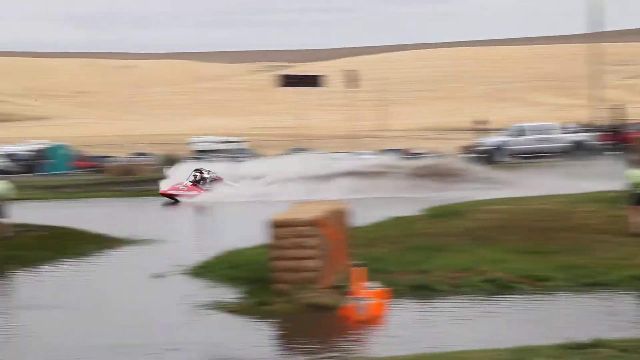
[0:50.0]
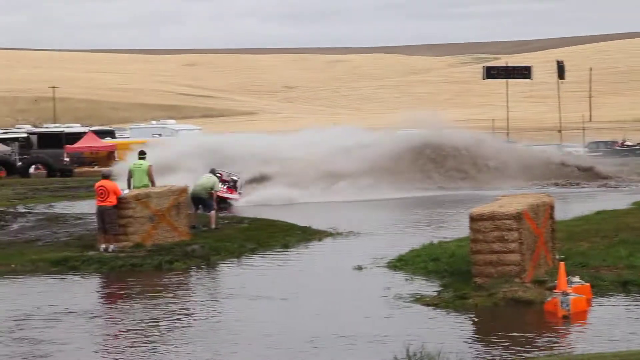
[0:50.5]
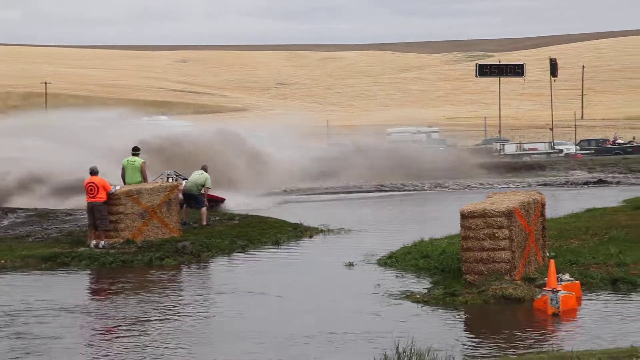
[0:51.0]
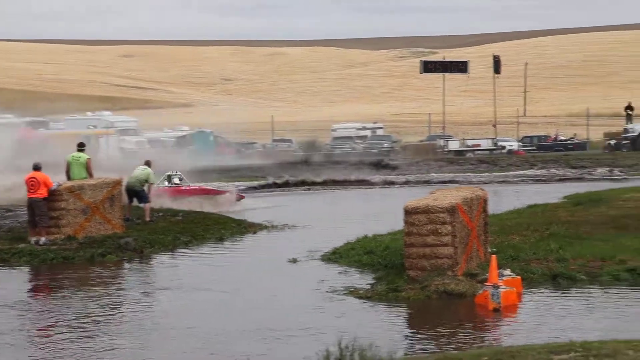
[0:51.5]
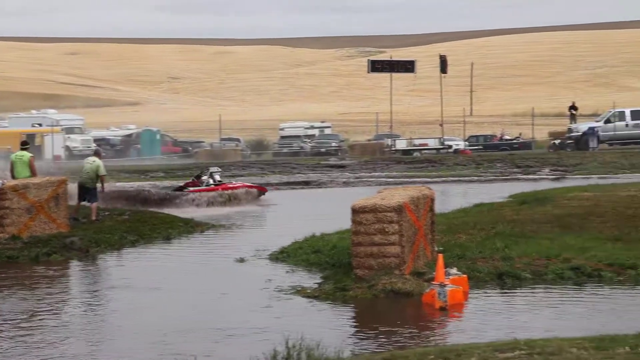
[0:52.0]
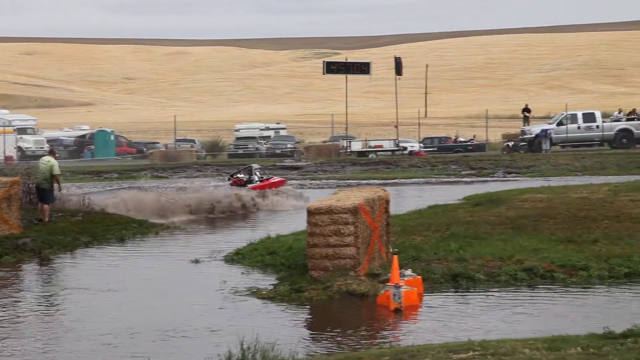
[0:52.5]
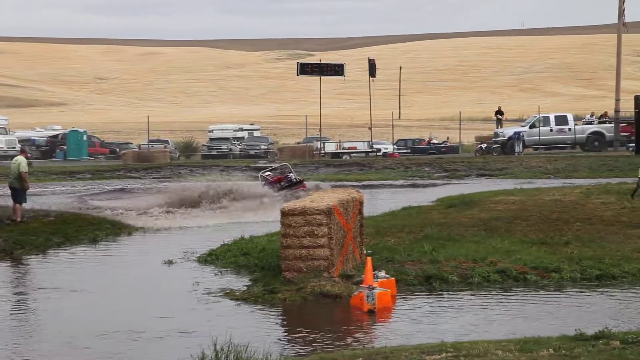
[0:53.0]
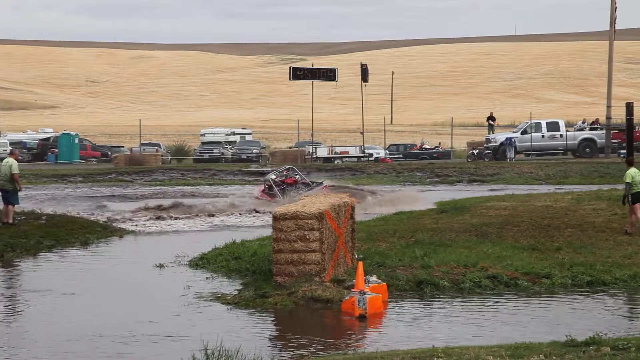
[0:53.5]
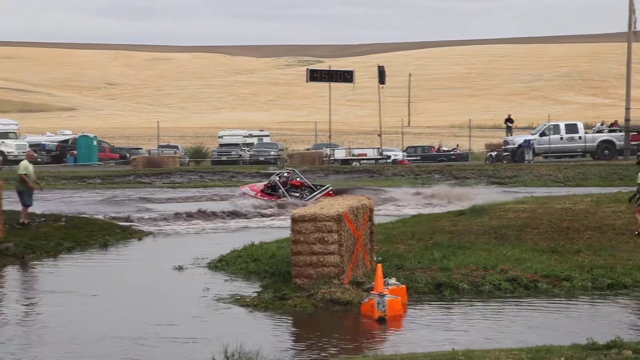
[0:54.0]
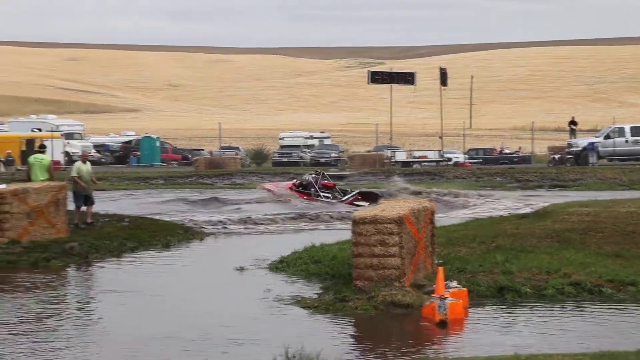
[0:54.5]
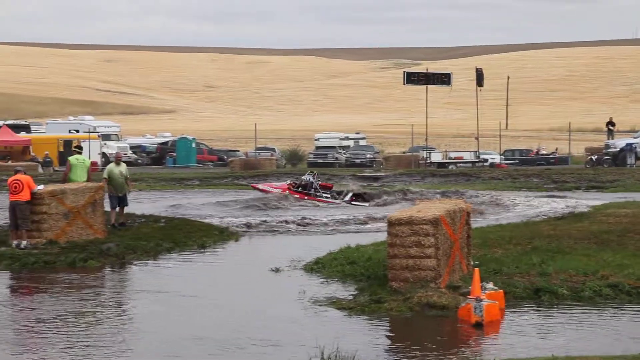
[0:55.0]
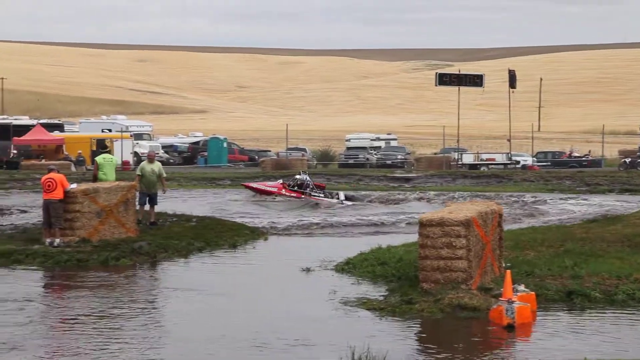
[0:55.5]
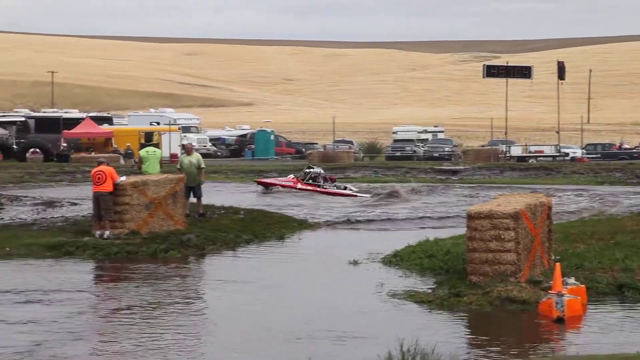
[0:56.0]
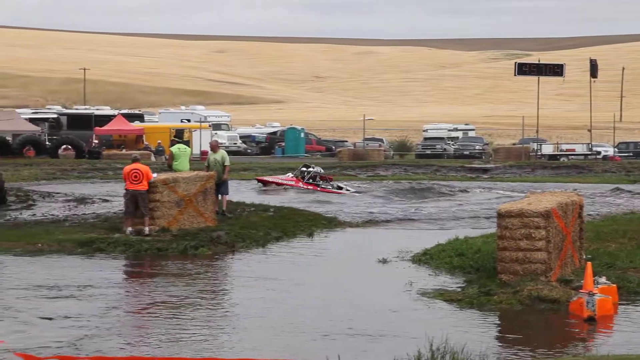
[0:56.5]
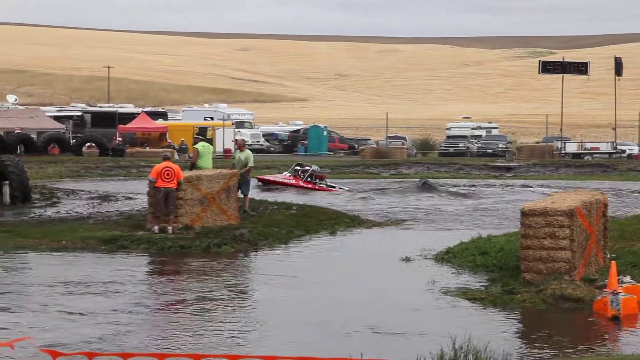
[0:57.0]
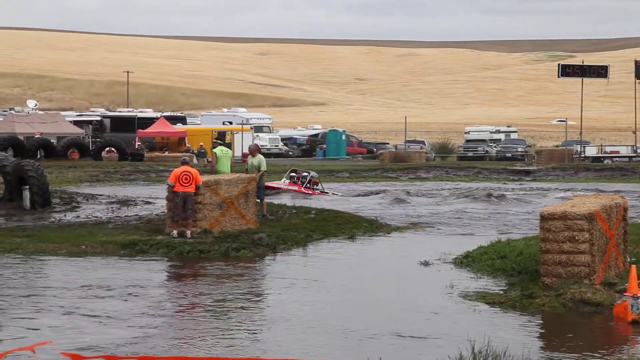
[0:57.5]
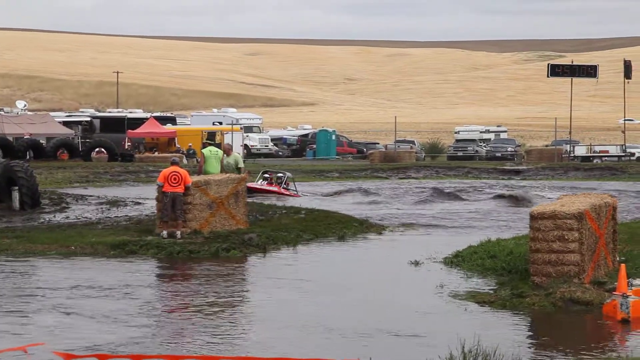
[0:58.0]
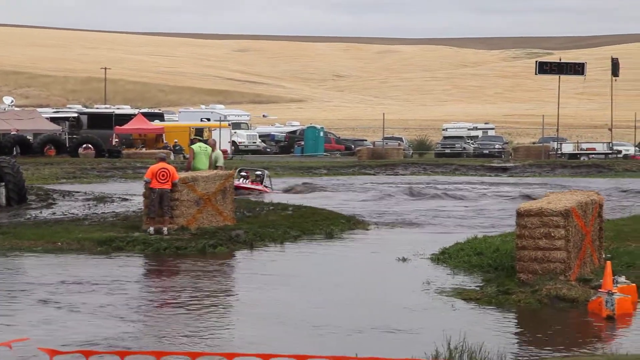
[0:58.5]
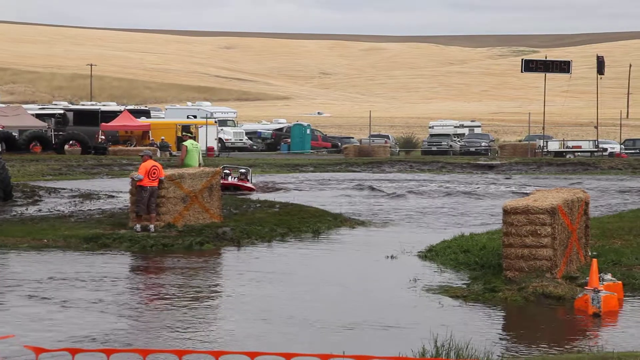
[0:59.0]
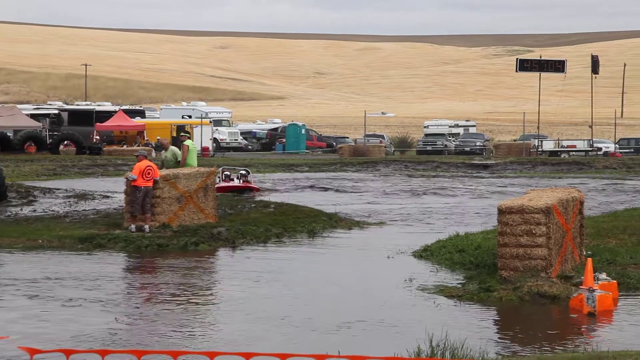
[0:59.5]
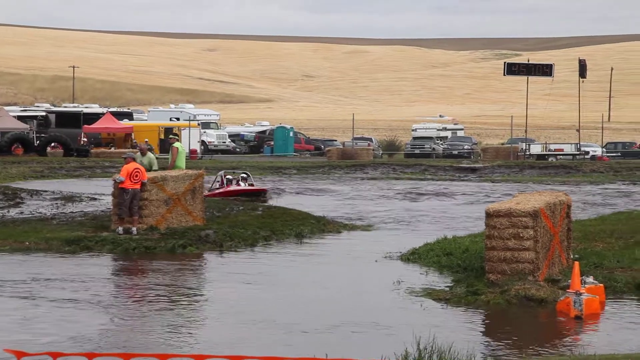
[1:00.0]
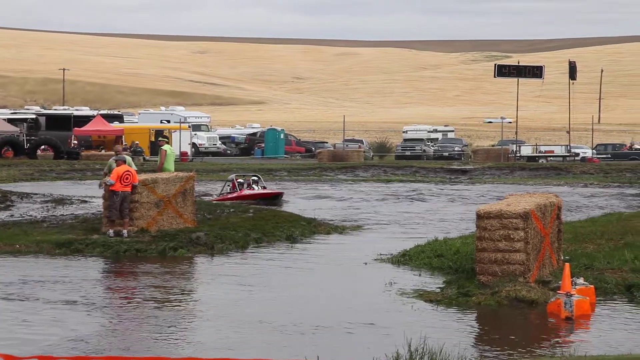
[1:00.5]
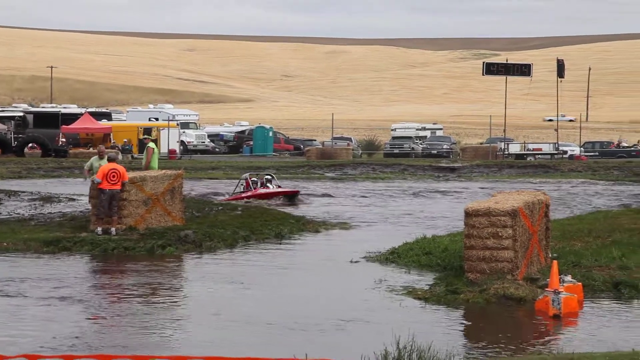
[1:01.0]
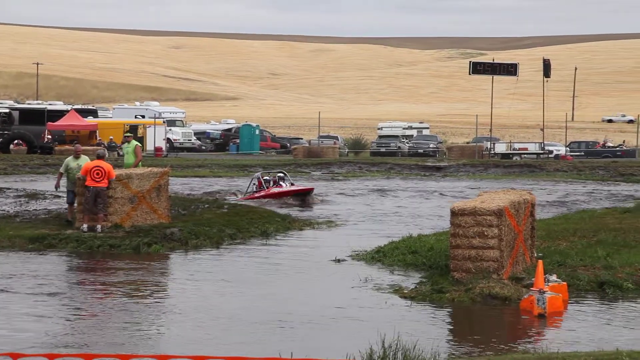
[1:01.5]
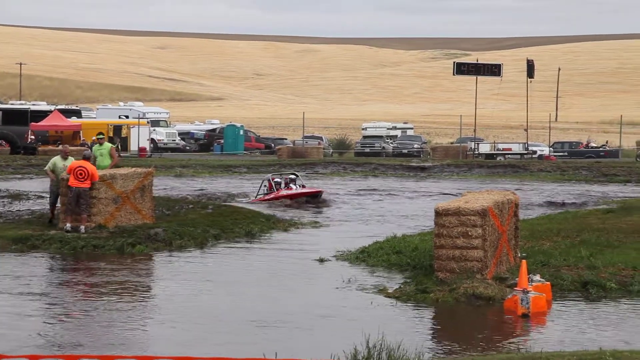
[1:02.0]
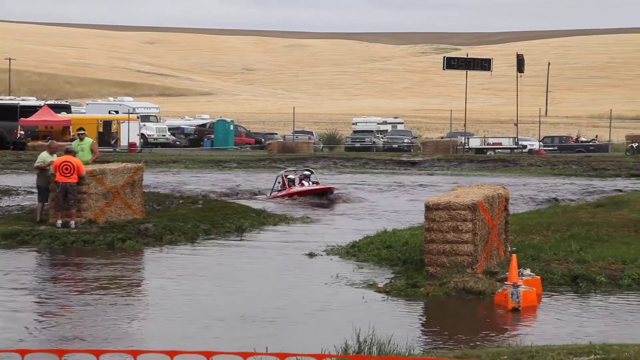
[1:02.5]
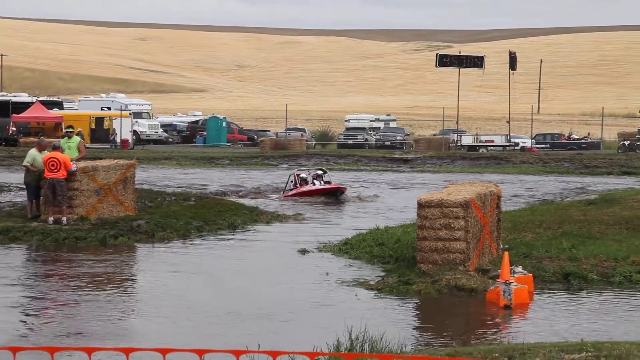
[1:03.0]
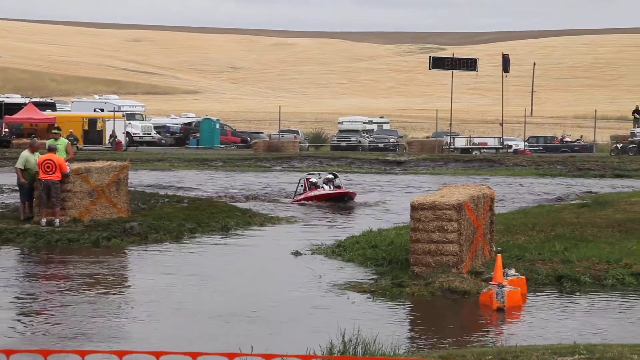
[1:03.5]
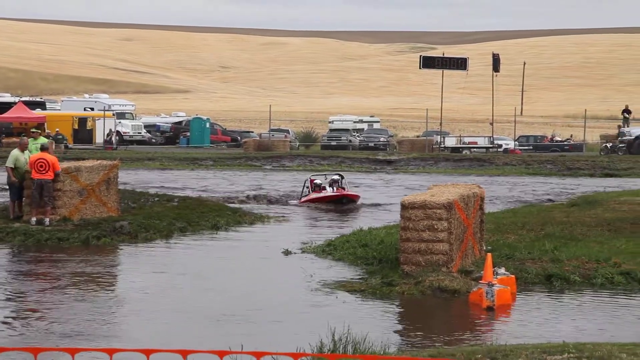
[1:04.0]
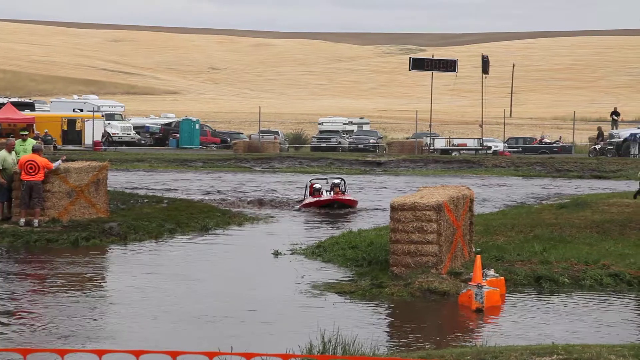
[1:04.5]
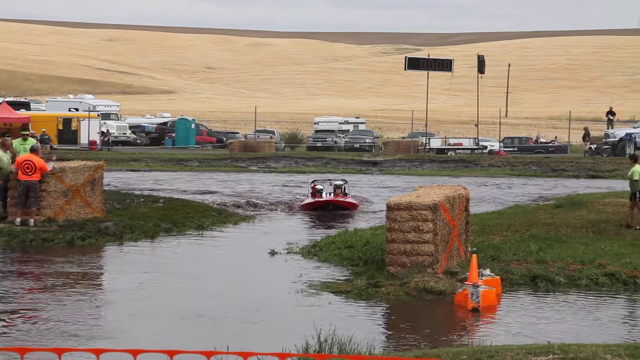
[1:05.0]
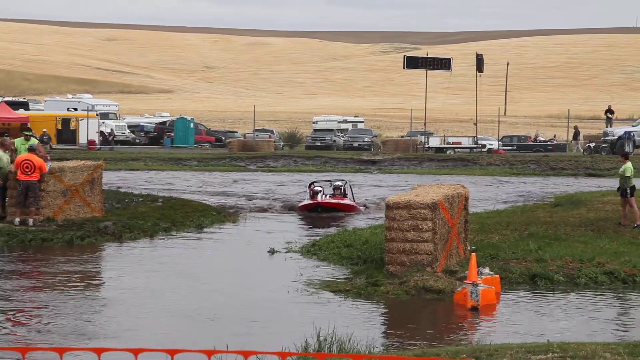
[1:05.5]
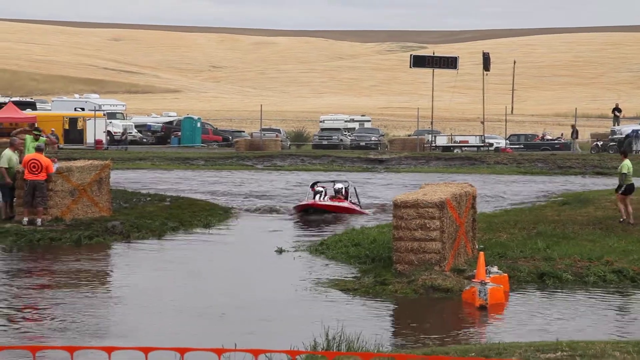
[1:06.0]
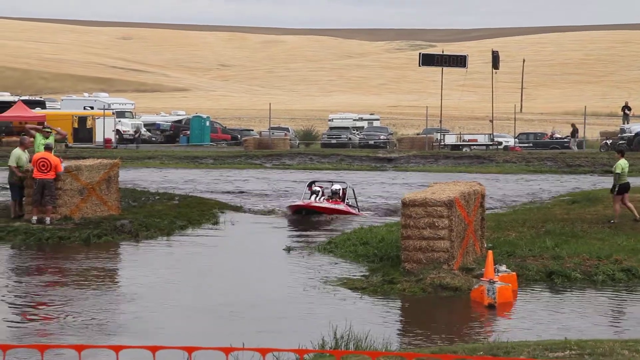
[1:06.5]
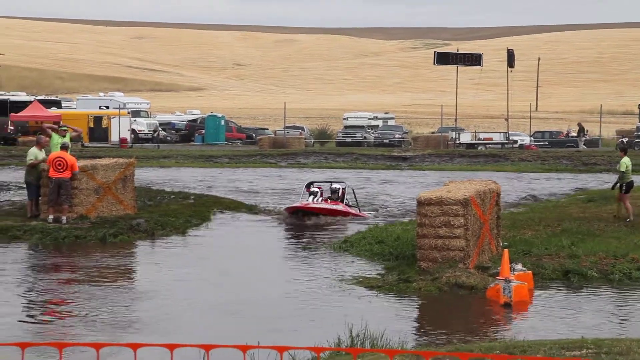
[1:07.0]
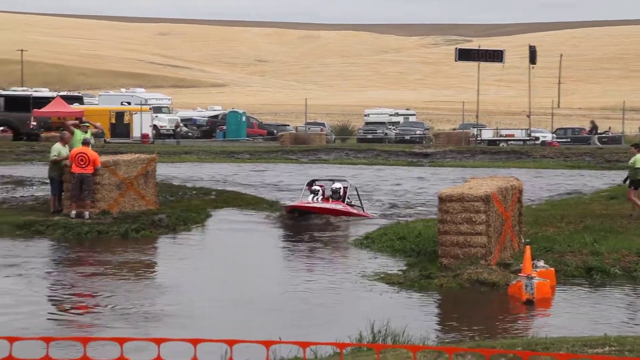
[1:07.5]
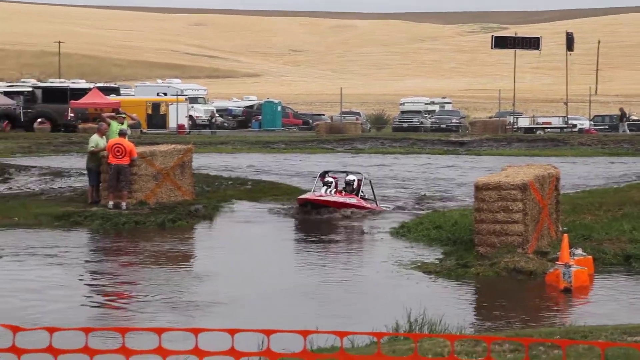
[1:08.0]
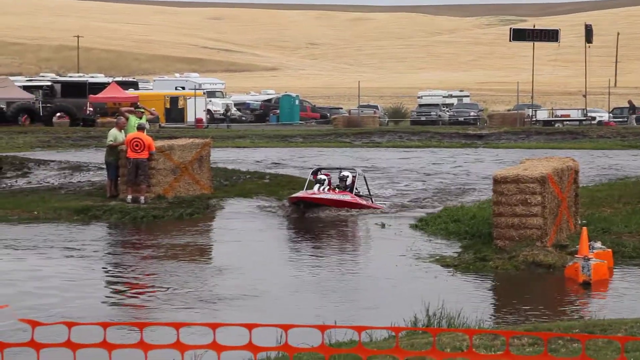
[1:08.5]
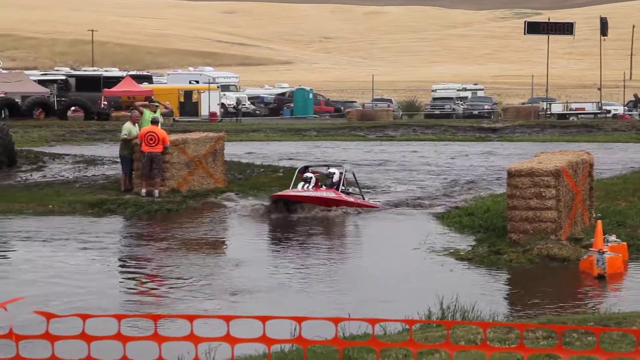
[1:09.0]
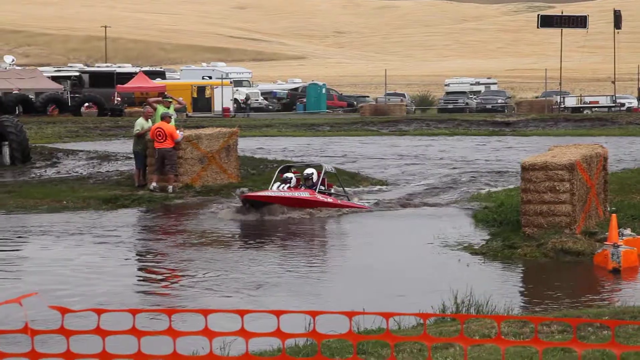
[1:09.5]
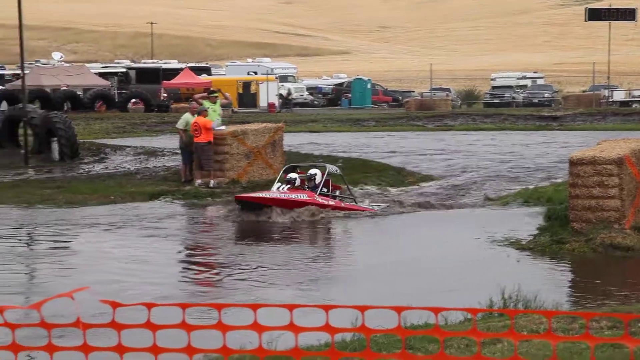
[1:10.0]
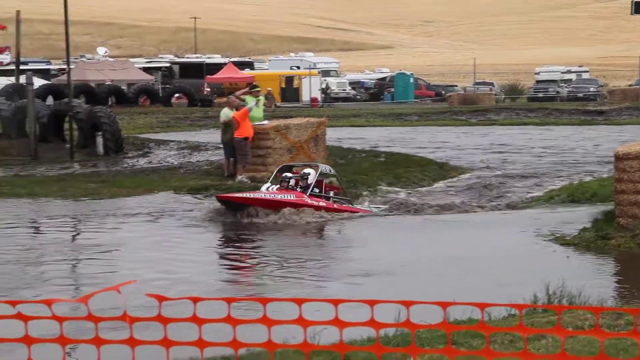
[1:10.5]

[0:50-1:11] The boat appears to have completed the course. It has slowed down and circles in an area of water until it slowly passes between a group of marshals. There are two large hay bales with X's on them, and the boat drives through an inlet between them, appearing to leave the course. The boat is red, and there are two drivers, both wearing white helmets. Two marshals are wearing luminous yellow t-shirts and one is wearing bright orange. Around the course are a number of giant black tractor tires, perhaps there to protect people in a crash. In the background, a couple of cars drive down what appears to be a road. There are also a number of parked cars and some smaller tents, one yellow and one red. What looks like orange cones and some orange fencing are in the foreground as the boat slowly ends its journey.